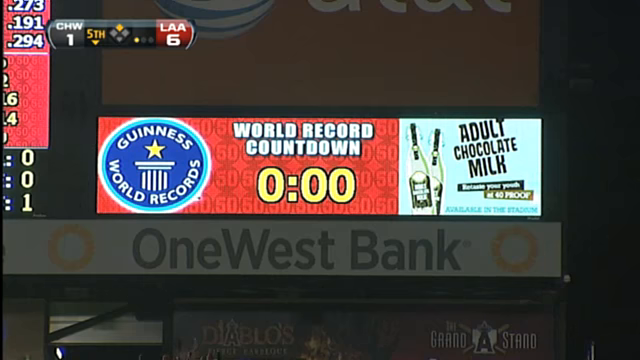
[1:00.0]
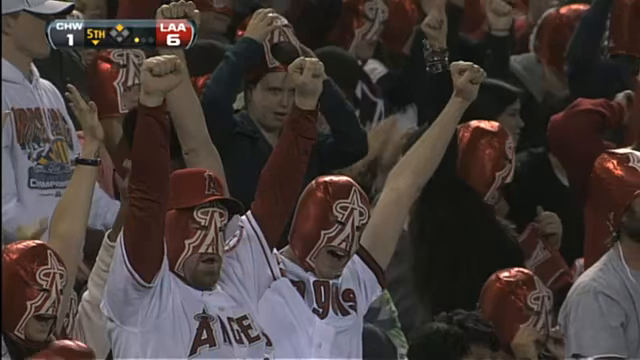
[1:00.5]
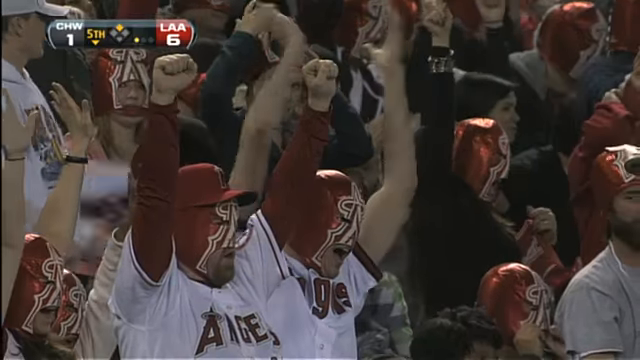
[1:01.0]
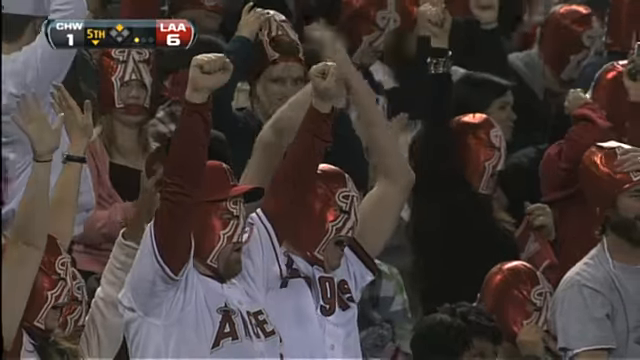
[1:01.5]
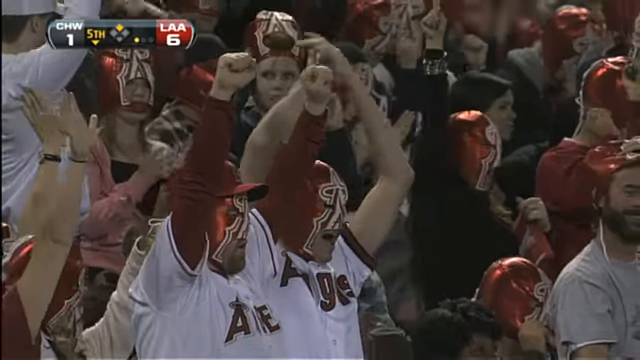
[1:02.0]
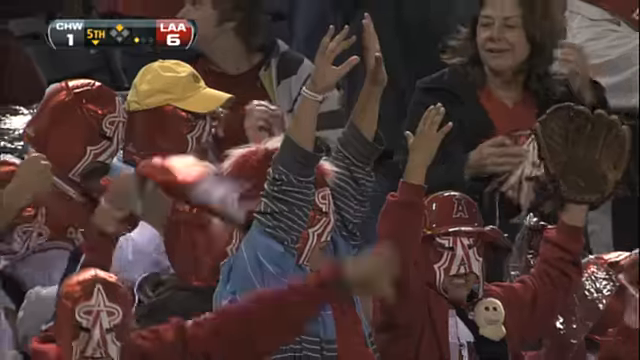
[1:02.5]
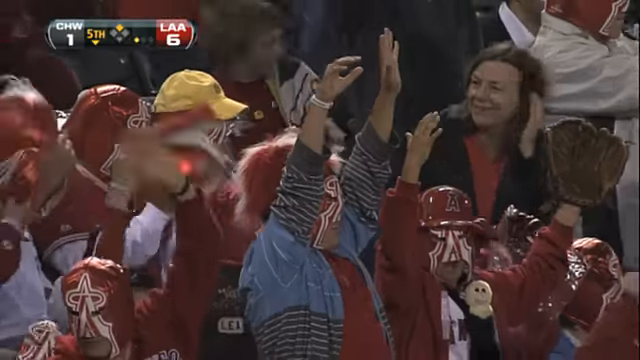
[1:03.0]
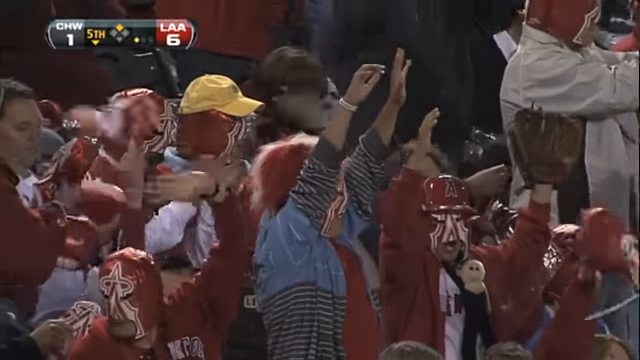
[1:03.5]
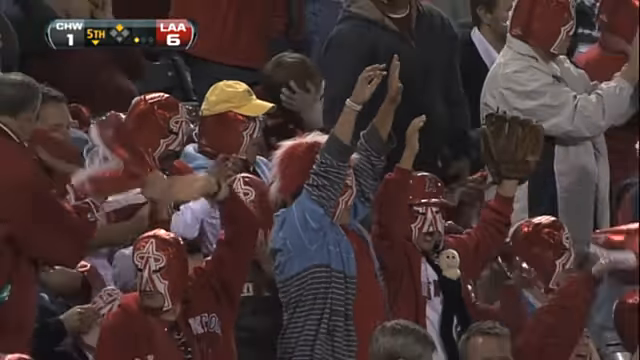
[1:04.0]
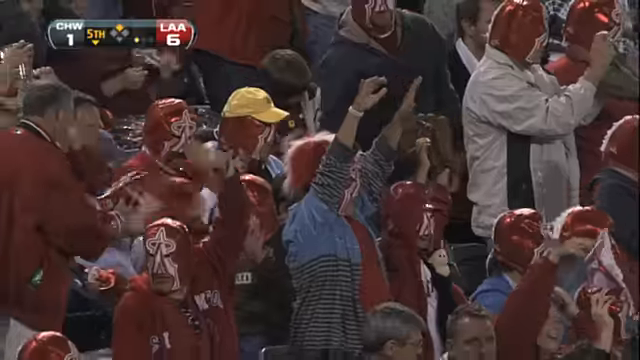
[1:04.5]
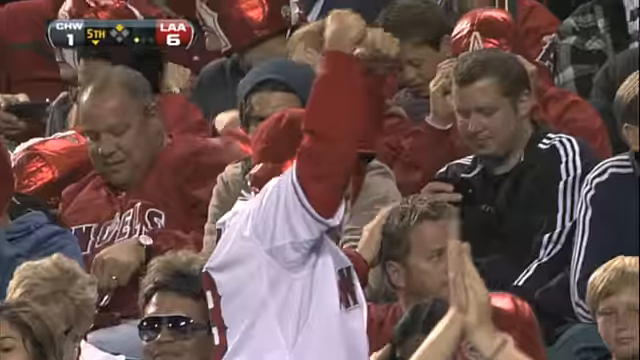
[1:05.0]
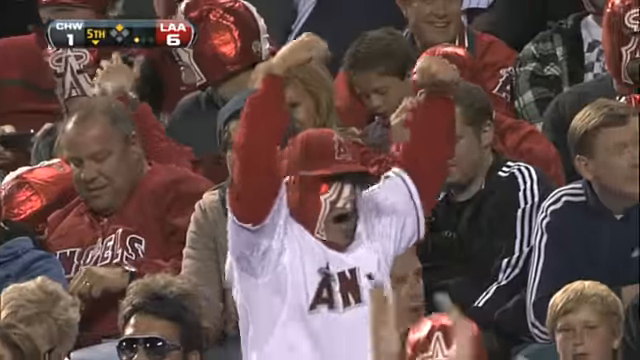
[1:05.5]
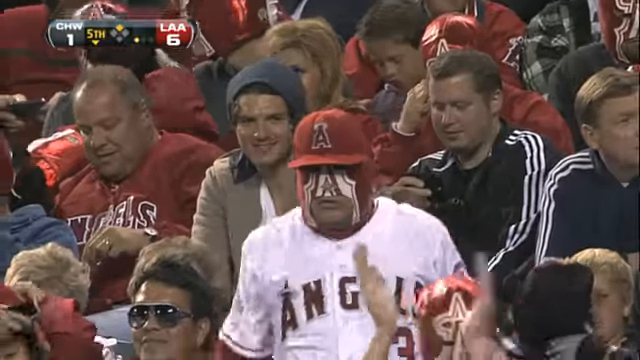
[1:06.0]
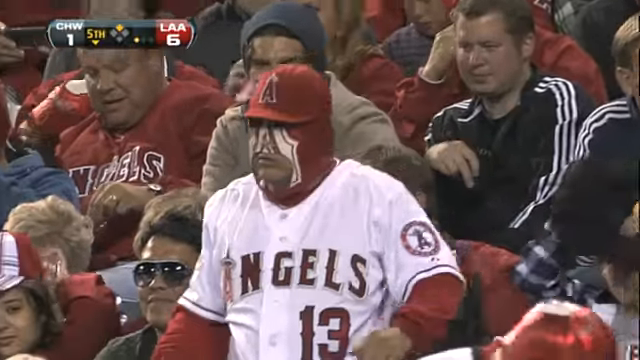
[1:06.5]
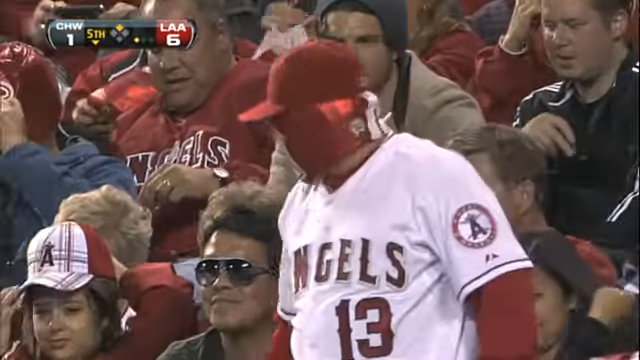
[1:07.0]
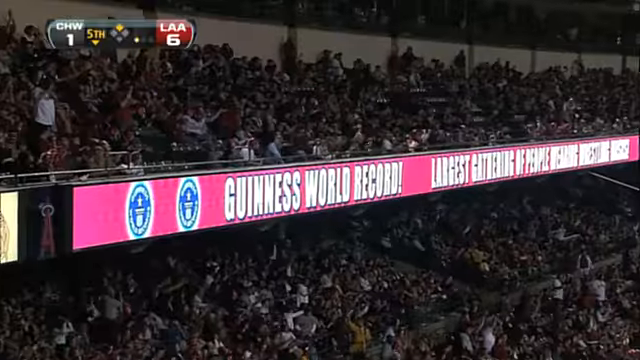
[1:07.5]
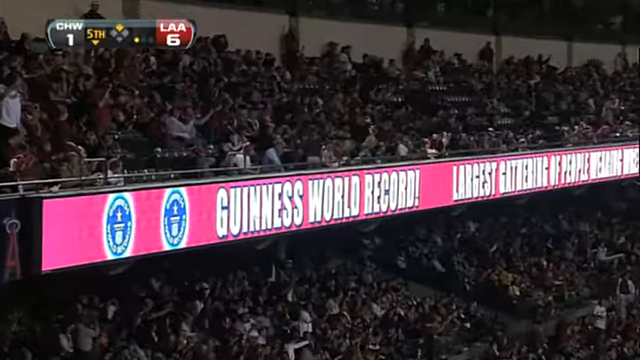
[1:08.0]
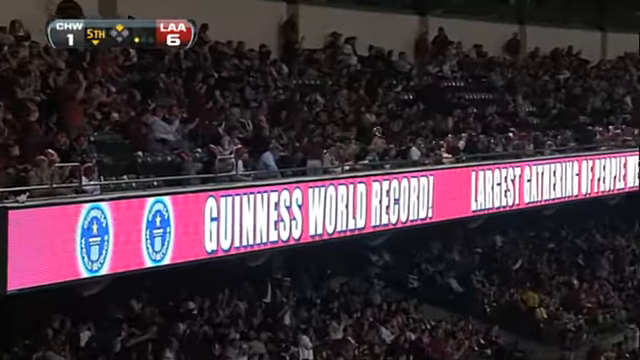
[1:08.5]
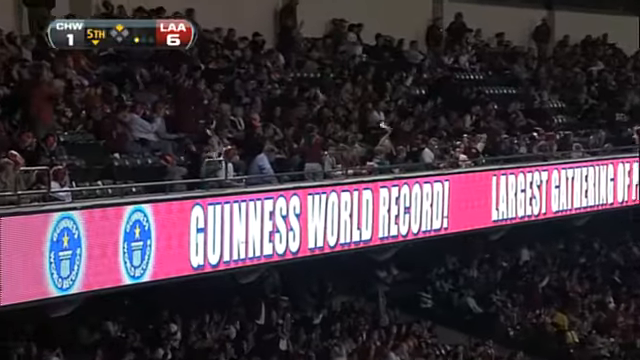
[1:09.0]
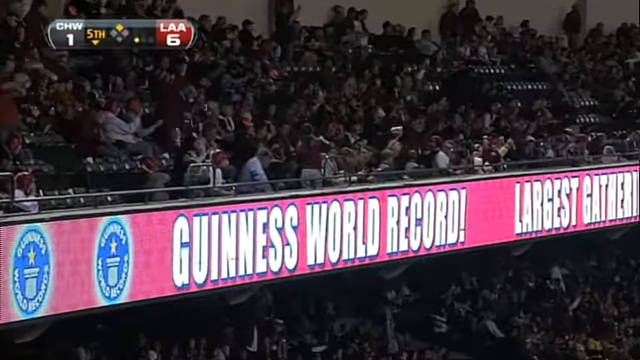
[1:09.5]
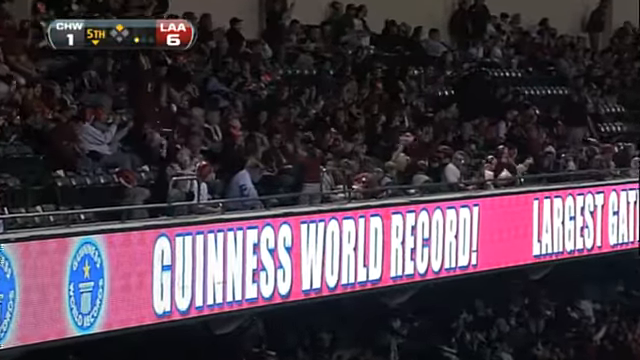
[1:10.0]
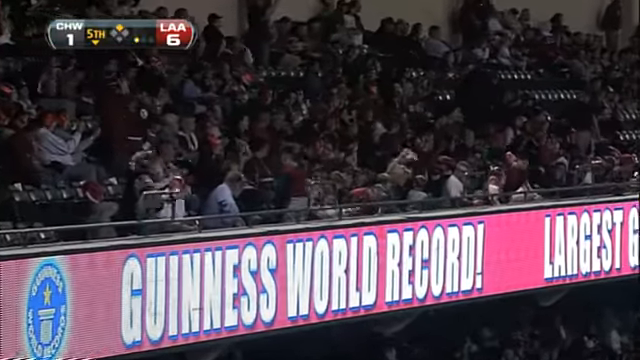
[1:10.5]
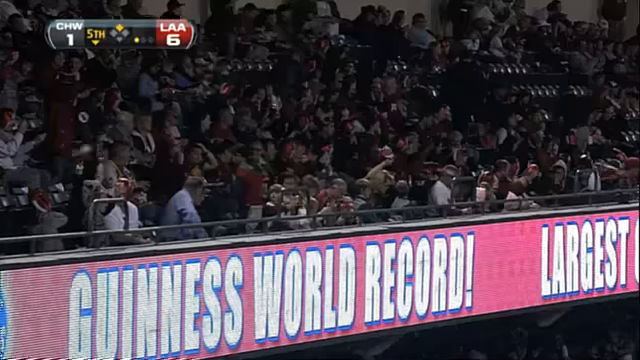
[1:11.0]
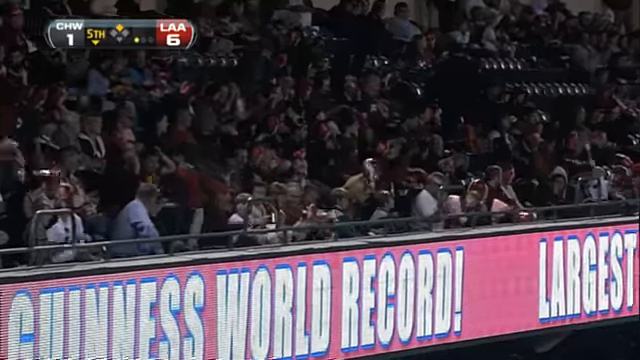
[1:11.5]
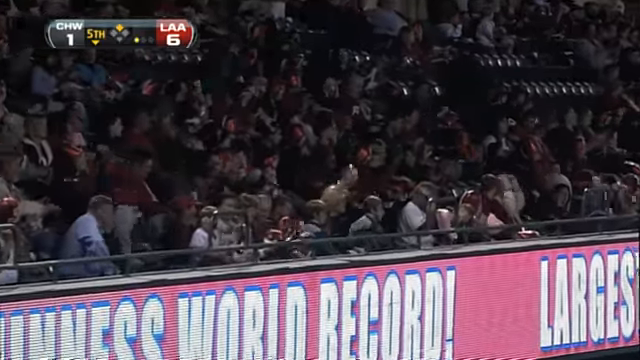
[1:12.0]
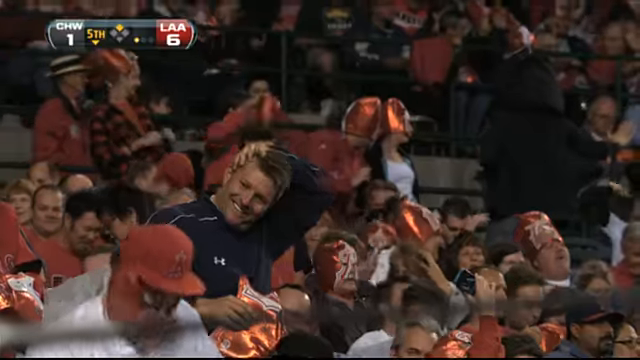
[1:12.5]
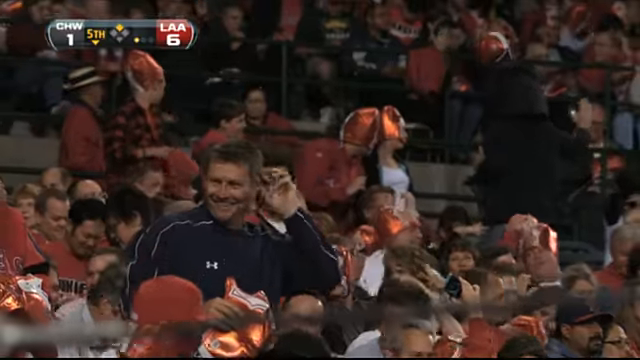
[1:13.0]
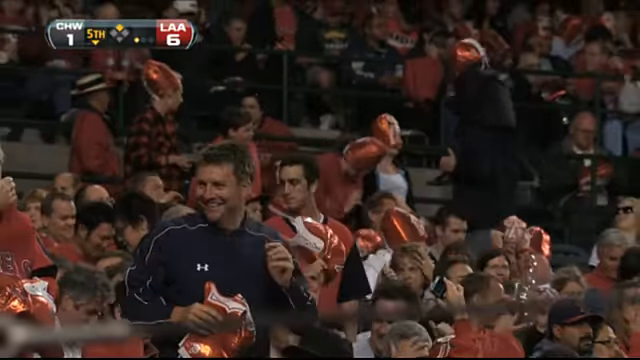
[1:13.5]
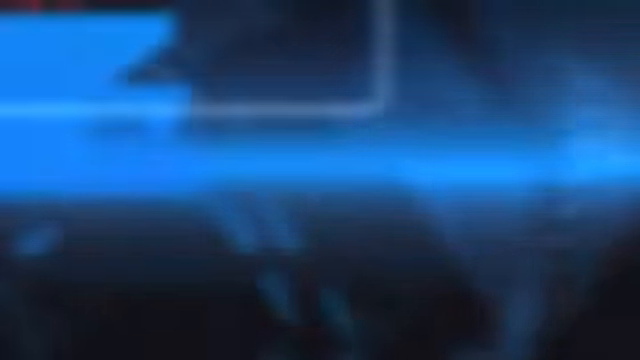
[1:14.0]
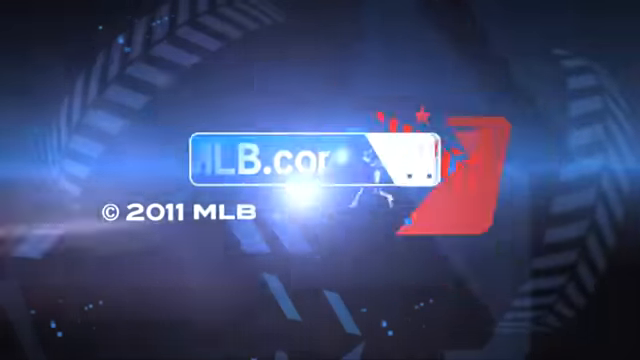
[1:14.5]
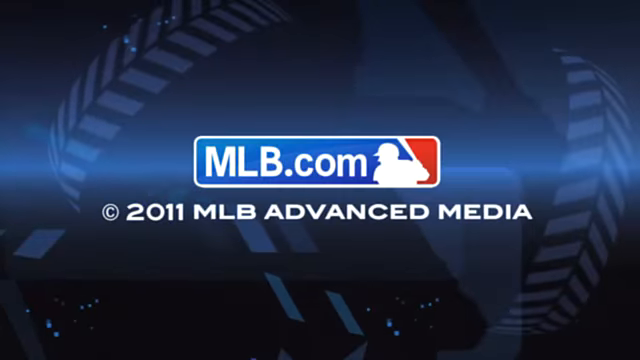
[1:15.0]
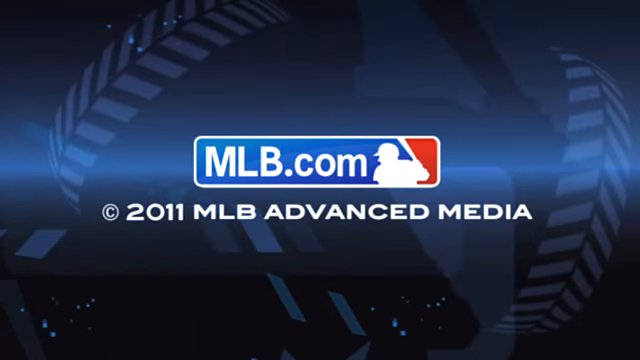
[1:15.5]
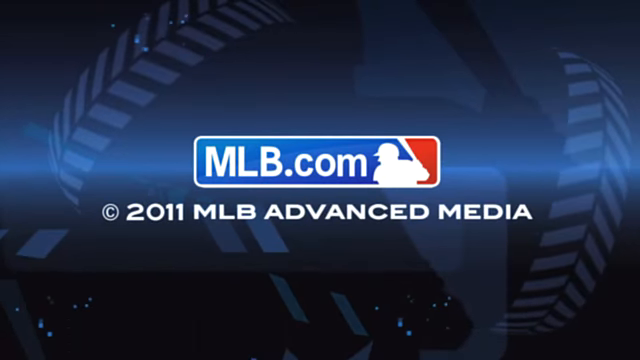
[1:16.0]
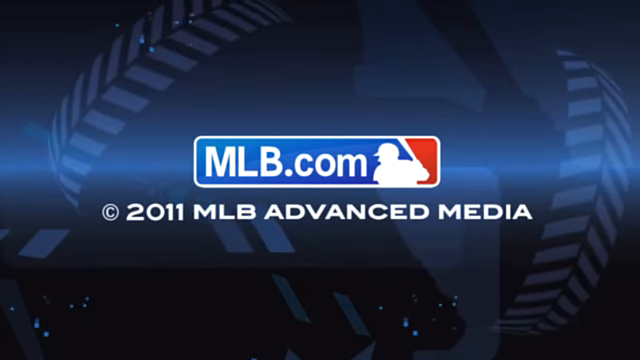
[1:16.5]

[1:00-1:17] At an evening Major League Baseball game, an illuminated sign in the outfield reads "Guinness World Records" and "World Record Countdown," with the countdown at zero. The camera pans into the audience, where many fans are wearing red wrestling masks with the Los Angeles Angels logo on the front, and all of the fans are cheering. The view then moves back to fans in the upper deck, all cheering, with an illuminated banner just below them that reads "Guinness World Record" and, next to it, text saying "largest gathering of people wearing wrestling masks." Lots of people are wearing the masks. The video ends with the MLB.com logo.